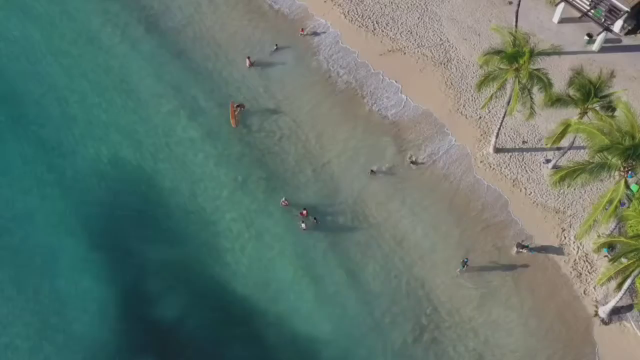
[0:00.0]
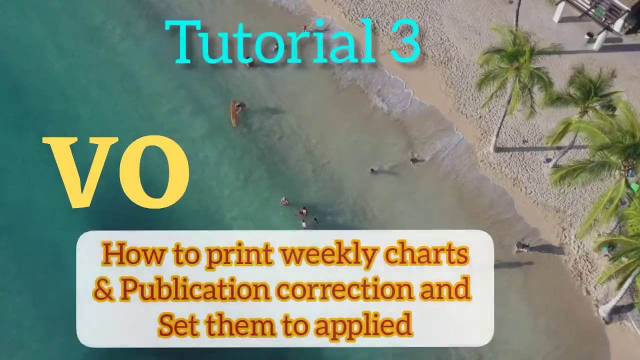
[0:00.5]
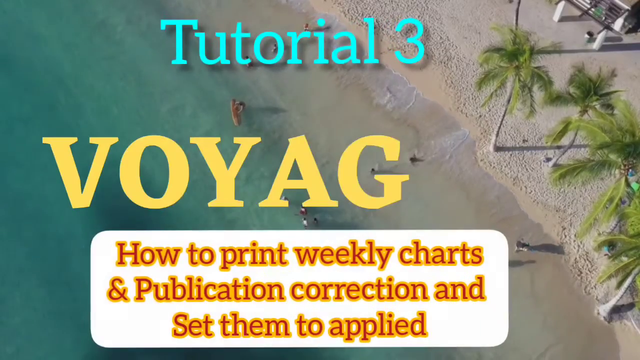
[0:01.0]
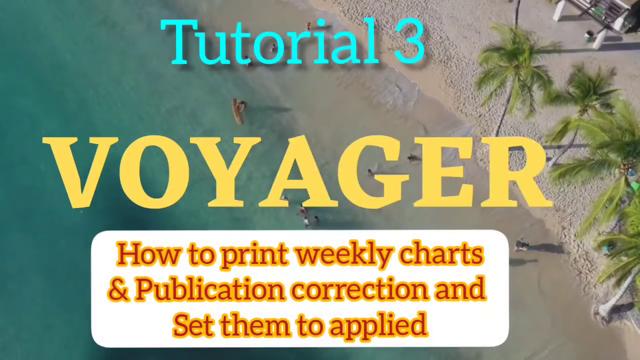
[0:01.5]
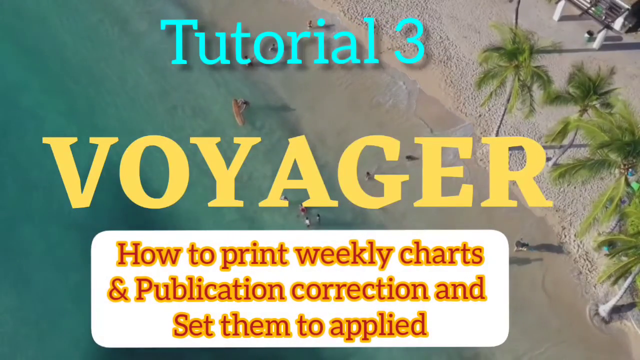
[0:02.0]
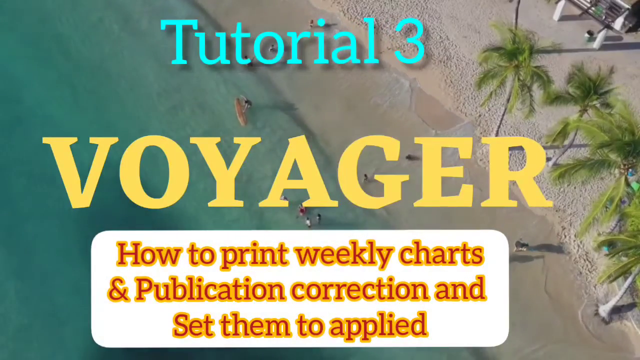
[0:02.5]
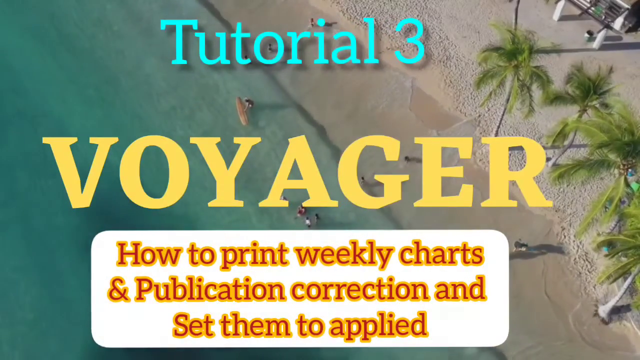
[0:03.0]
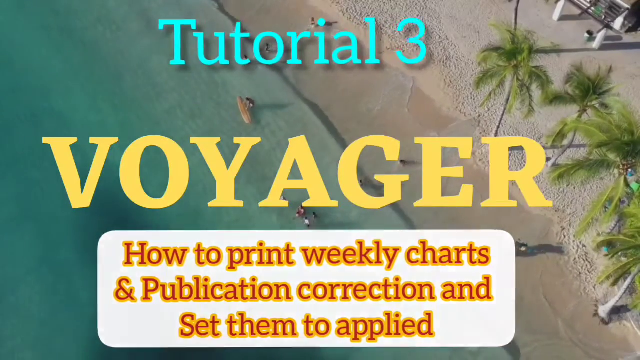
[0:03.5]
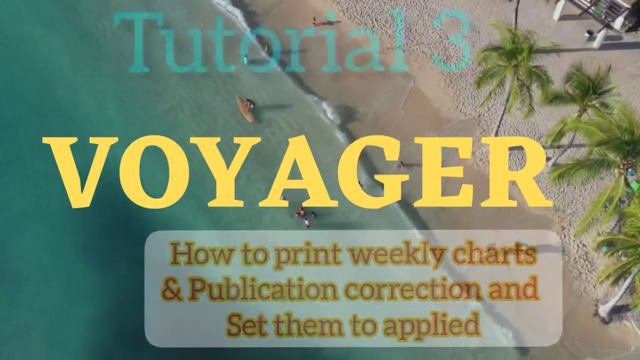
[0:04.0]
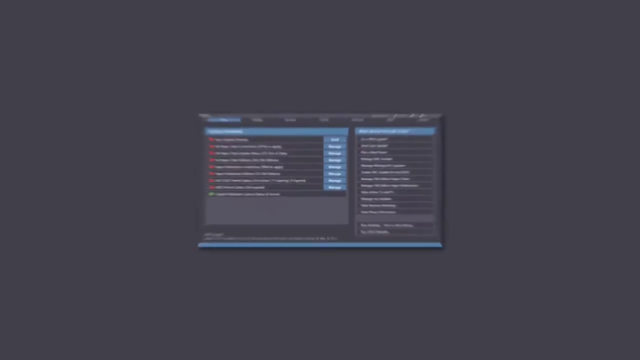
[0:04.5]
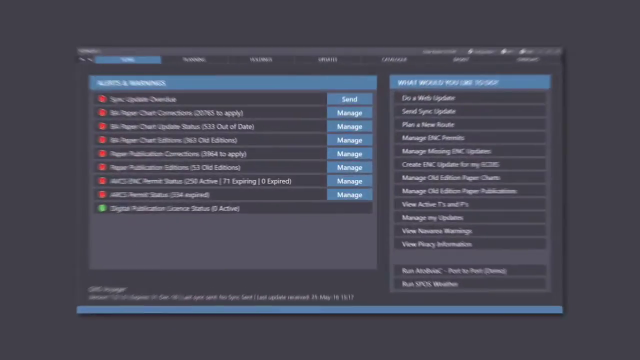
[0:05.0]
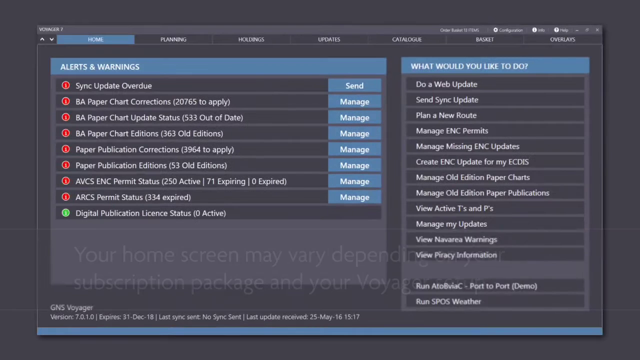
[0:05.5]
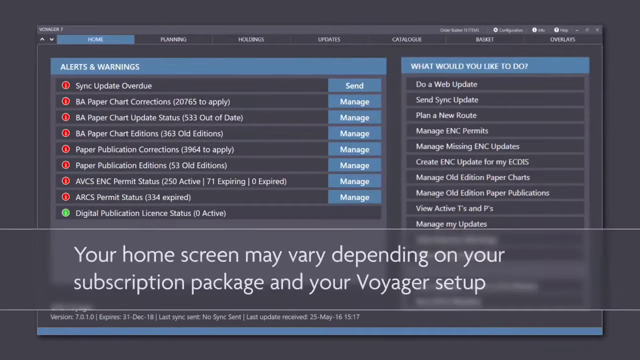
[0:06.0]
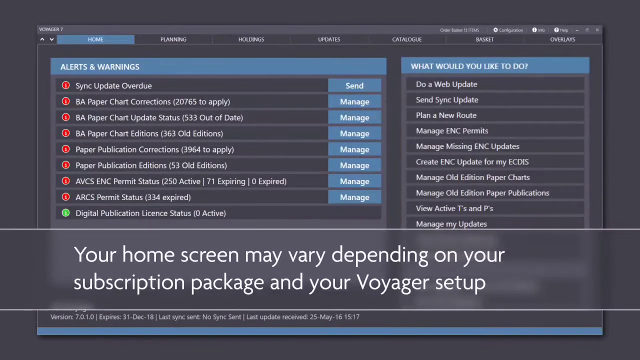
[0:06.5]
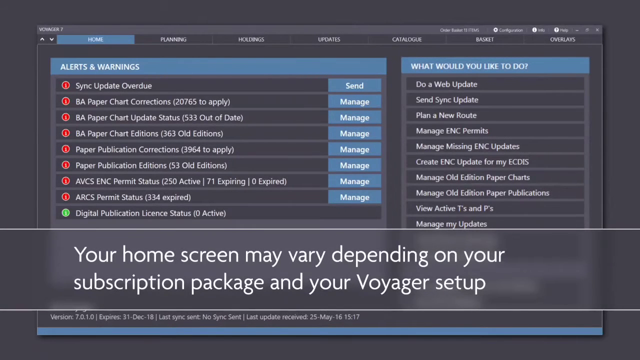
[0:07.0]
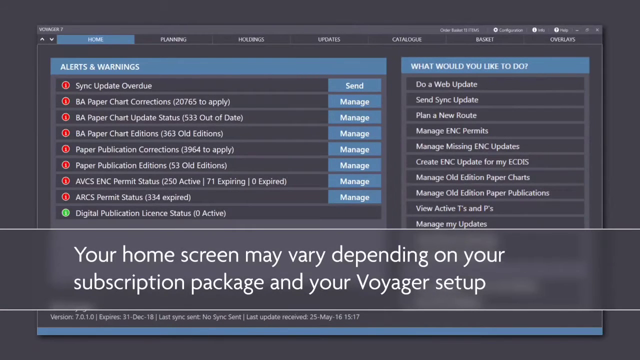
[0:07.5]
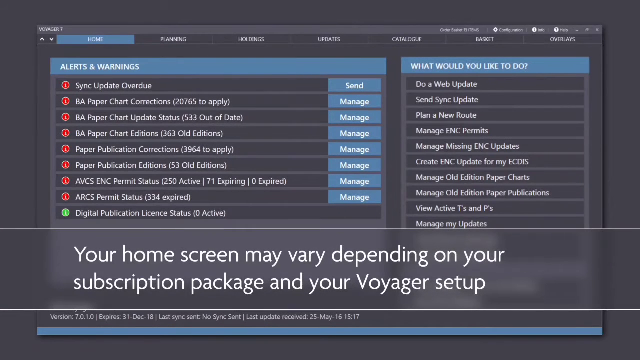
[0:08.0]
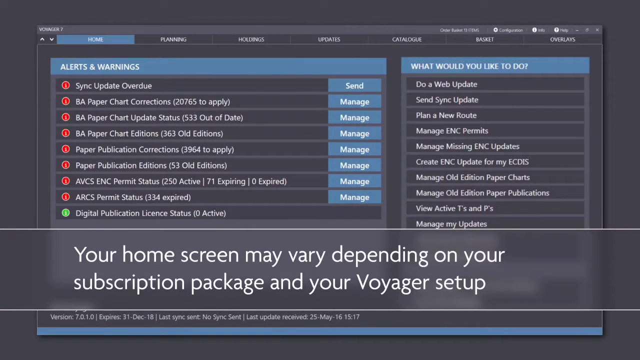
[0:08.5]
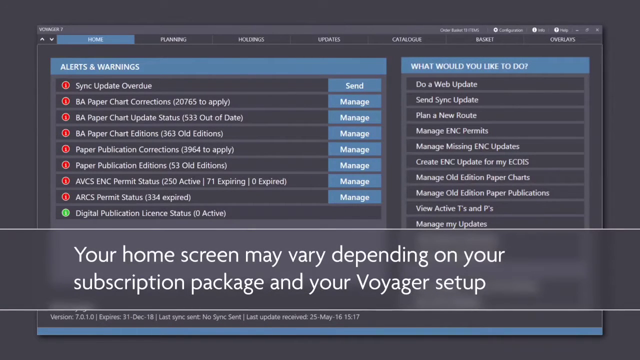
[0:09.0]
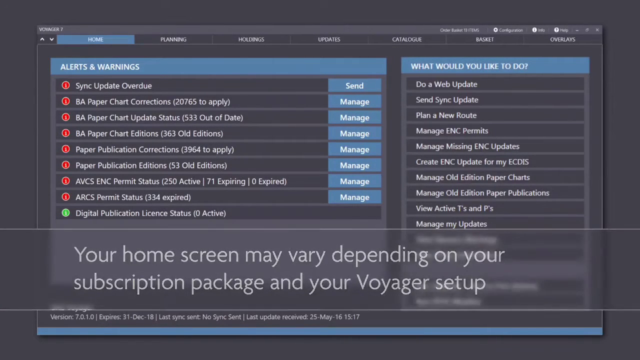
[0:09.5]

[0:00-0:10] A beach scene is viewed from above, looking down. Palm trees are on the right, and there are people on the beach and in the water, which is a teal color; the people look like they are enjoying themselves. Text appears on the screen: "Tutorial 3, Voyager, how to print weekly charts and publication correction and set them to applied." Next, a black screen appears that says "your home screen may vary depending on your subscription package and your Voyager setup." It gives instructions about setting up the subscription package and shows headings: "home, planning, holdings, updates, catalogue, basket, overlays," along with "alerts and warnings" and "what would you like to do?"